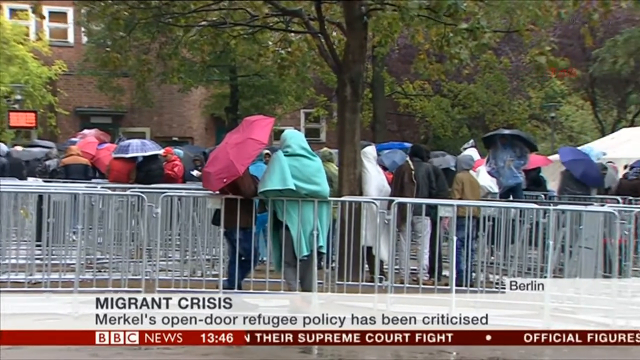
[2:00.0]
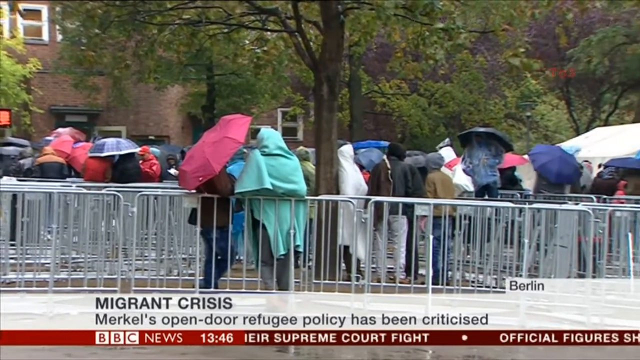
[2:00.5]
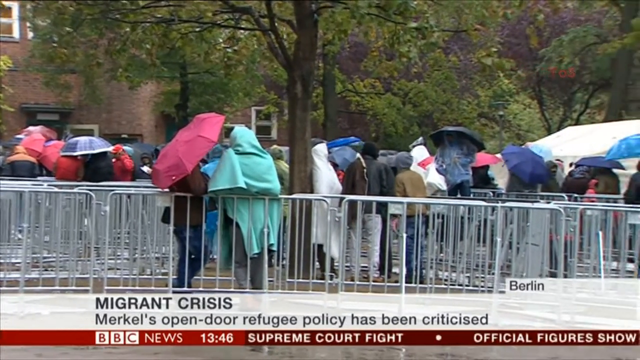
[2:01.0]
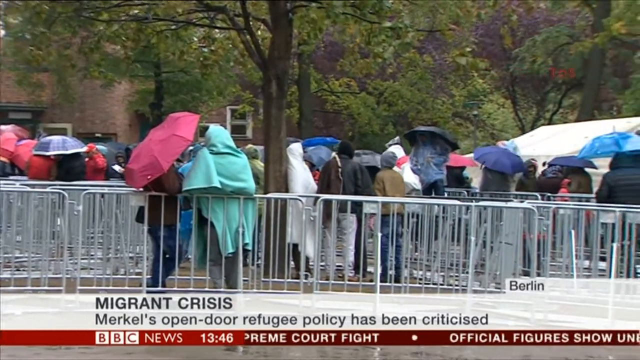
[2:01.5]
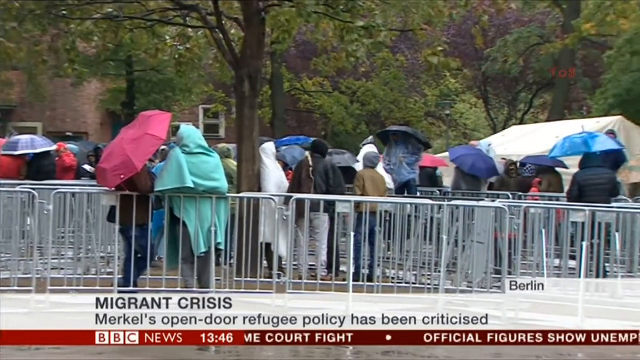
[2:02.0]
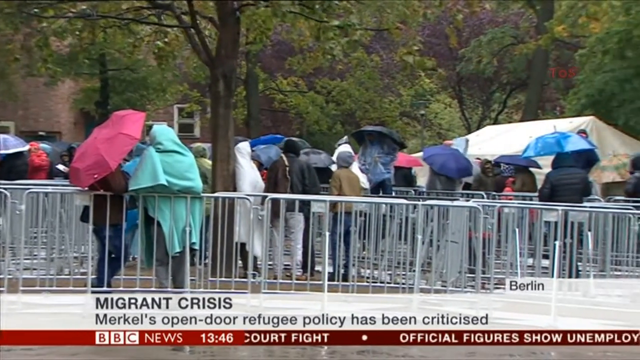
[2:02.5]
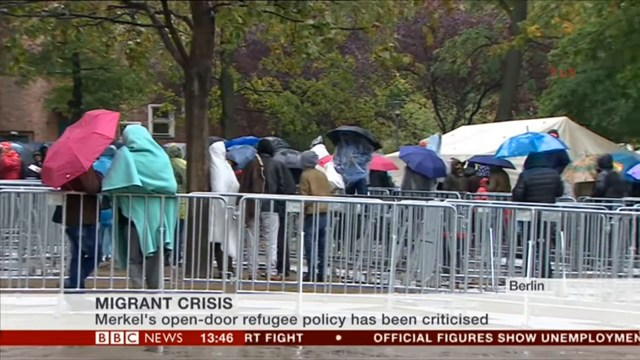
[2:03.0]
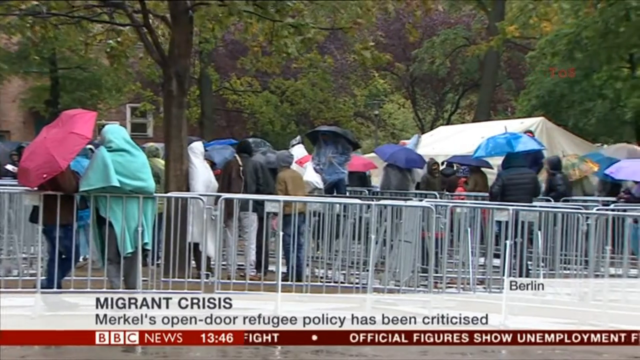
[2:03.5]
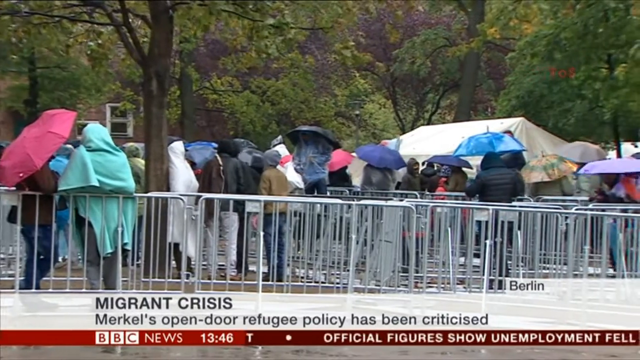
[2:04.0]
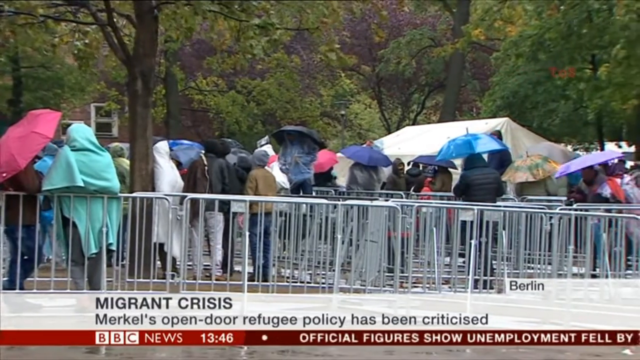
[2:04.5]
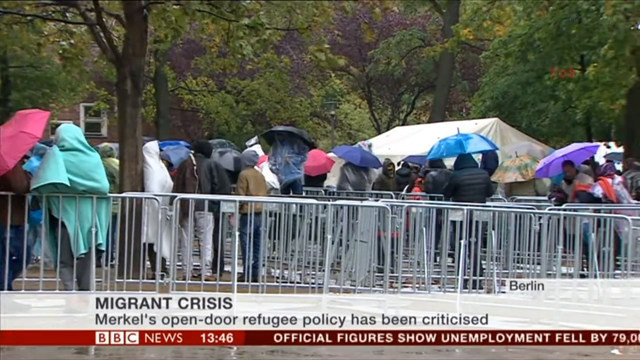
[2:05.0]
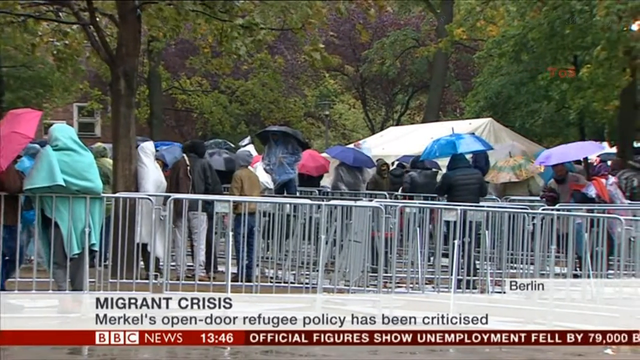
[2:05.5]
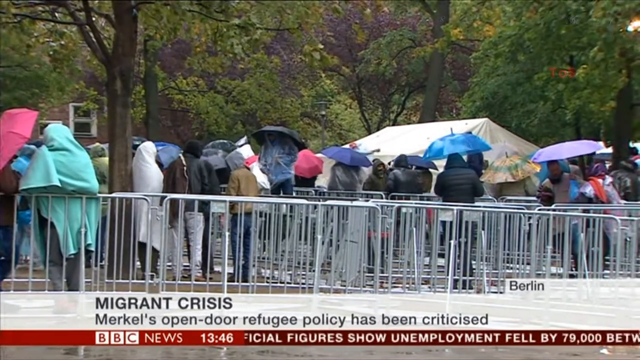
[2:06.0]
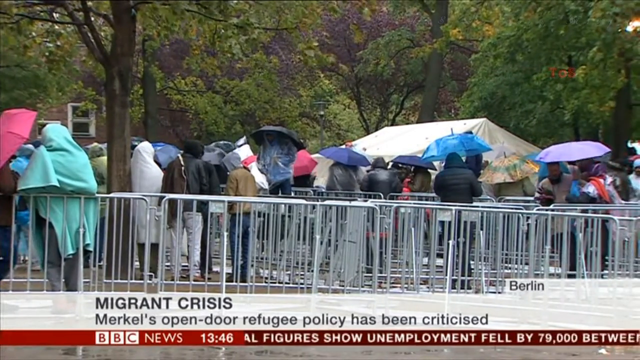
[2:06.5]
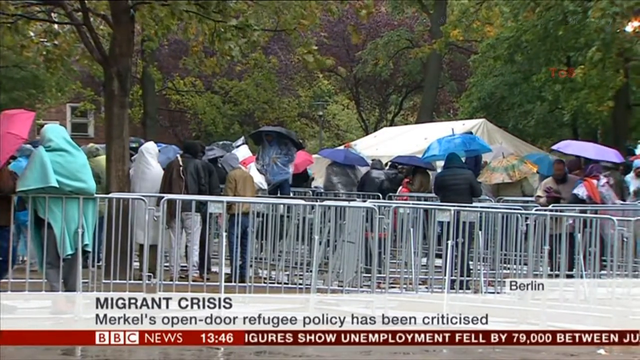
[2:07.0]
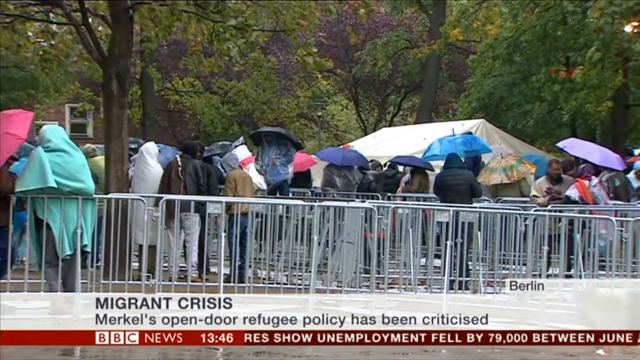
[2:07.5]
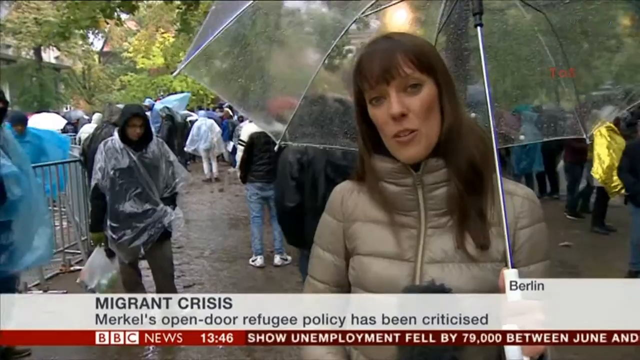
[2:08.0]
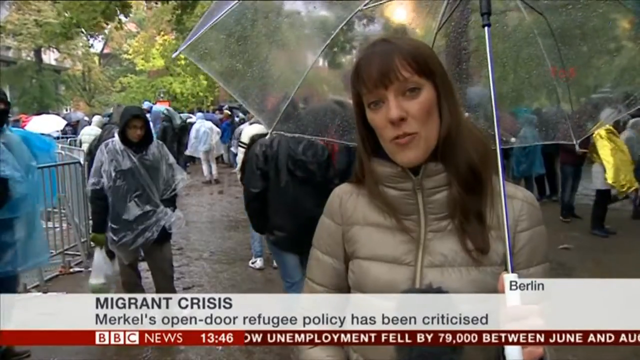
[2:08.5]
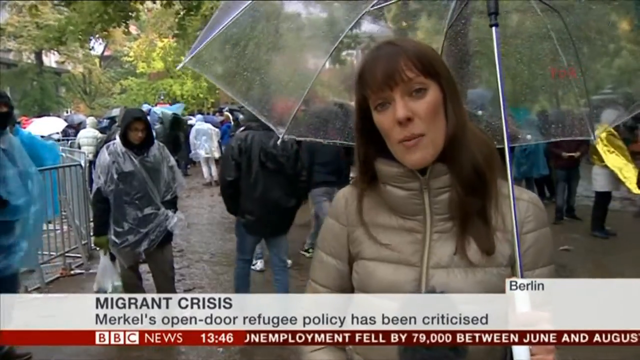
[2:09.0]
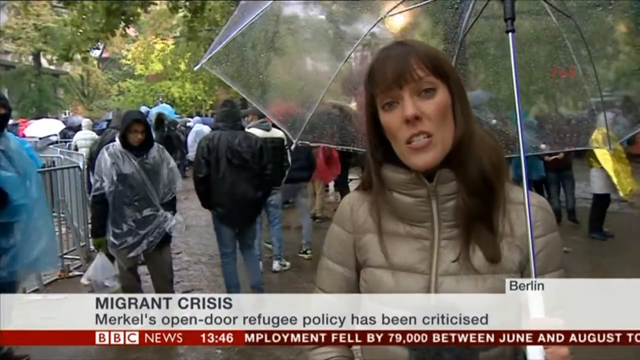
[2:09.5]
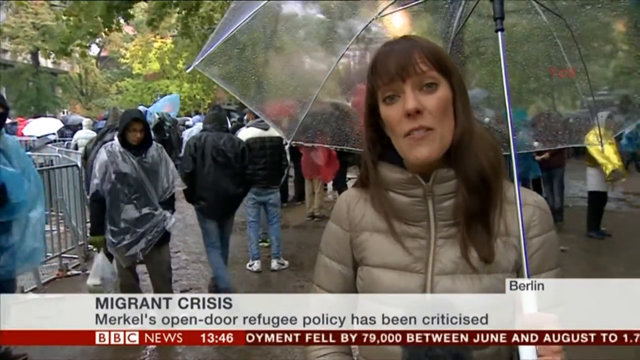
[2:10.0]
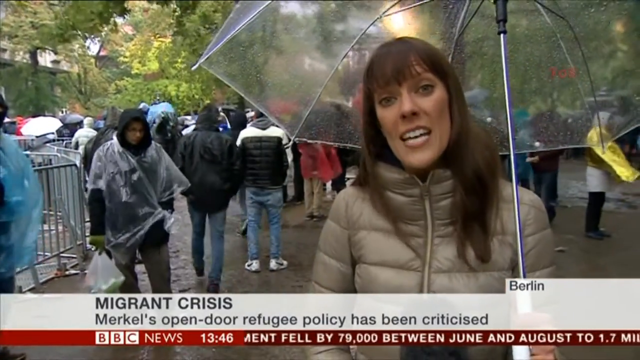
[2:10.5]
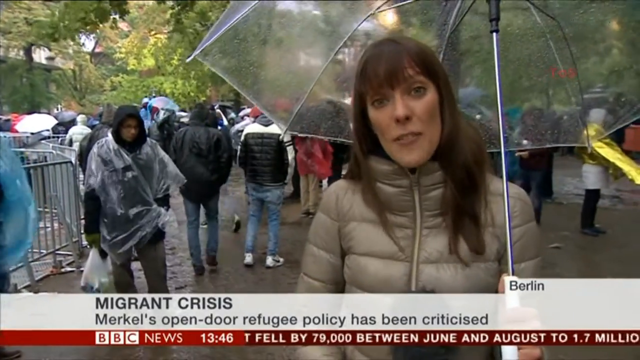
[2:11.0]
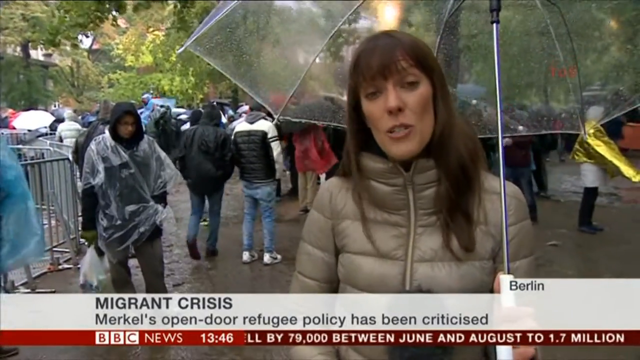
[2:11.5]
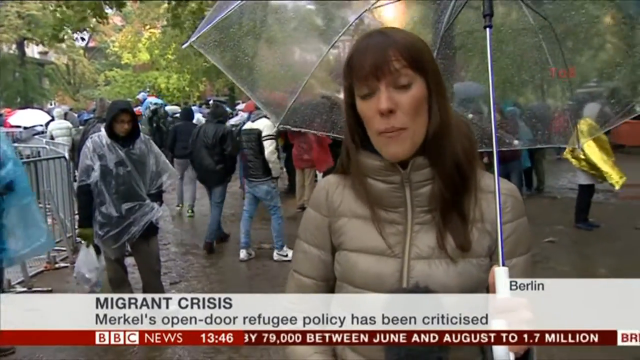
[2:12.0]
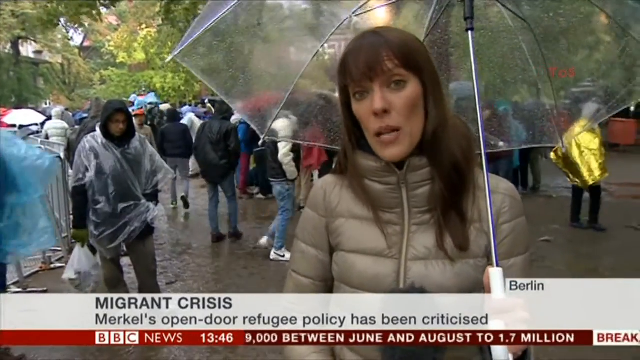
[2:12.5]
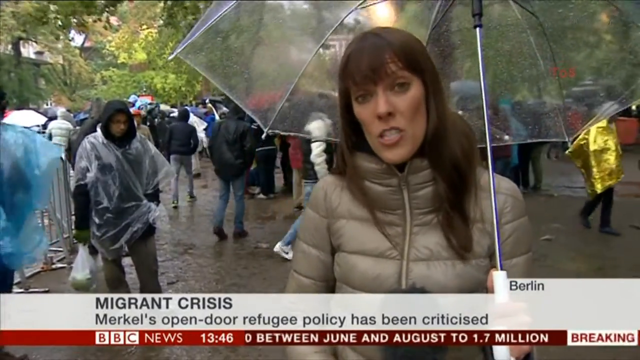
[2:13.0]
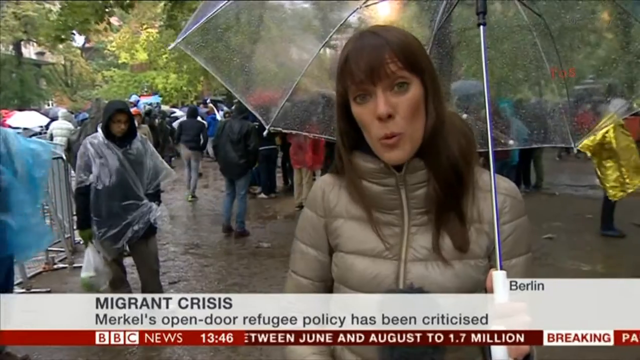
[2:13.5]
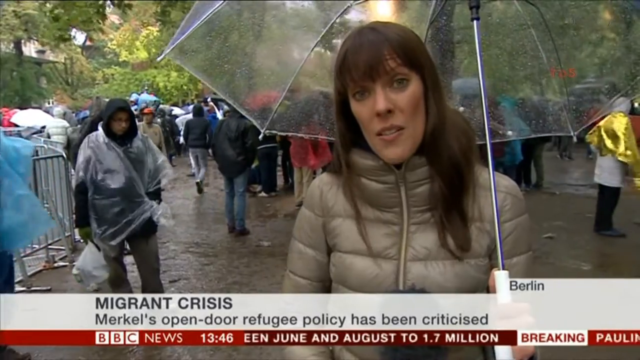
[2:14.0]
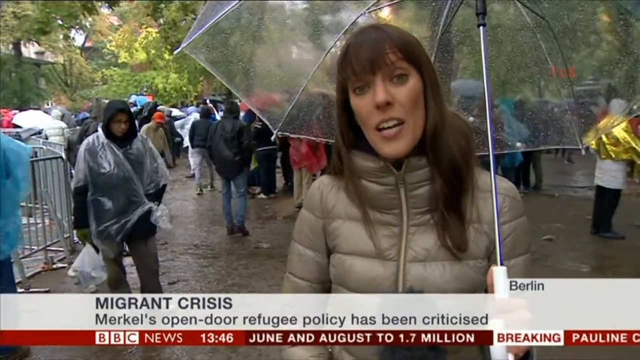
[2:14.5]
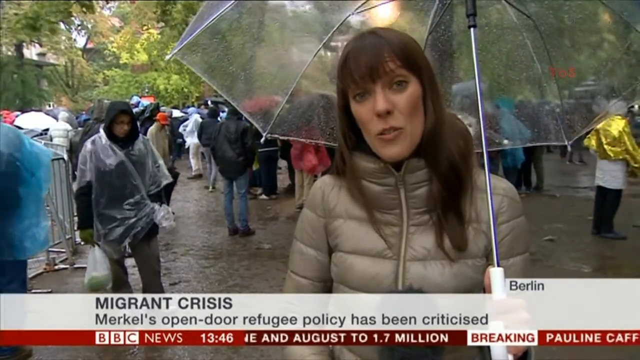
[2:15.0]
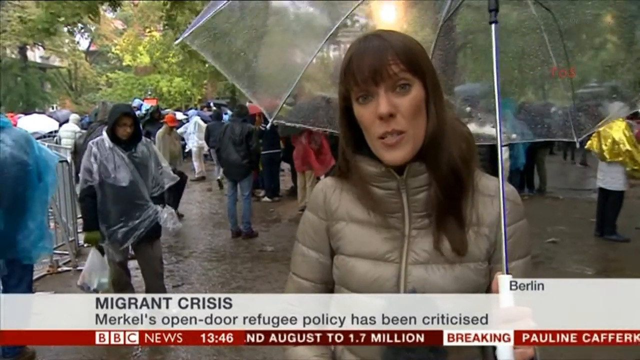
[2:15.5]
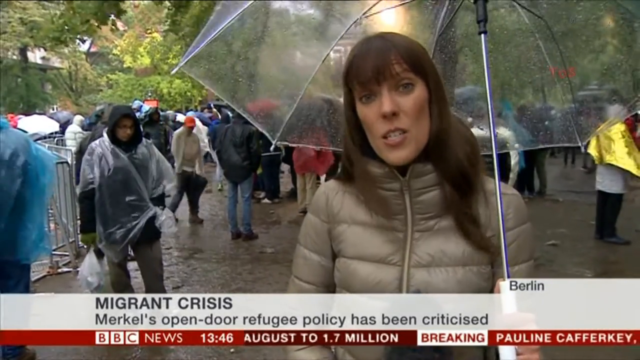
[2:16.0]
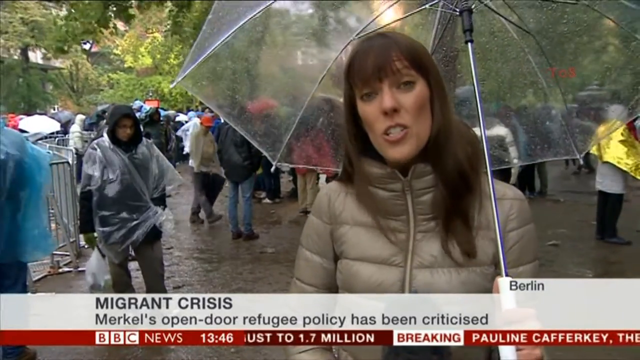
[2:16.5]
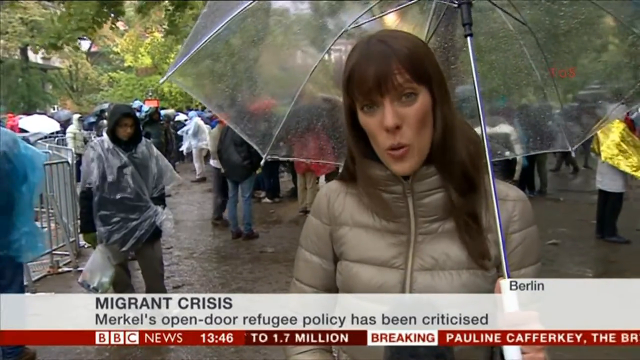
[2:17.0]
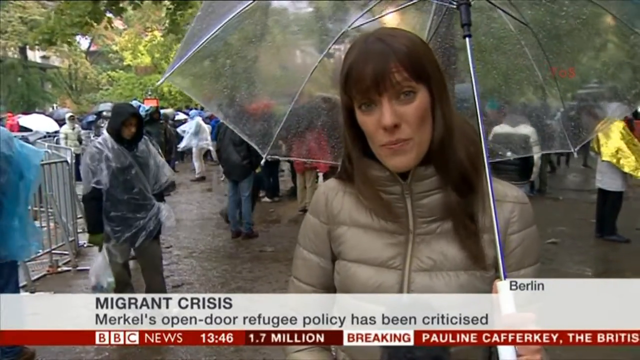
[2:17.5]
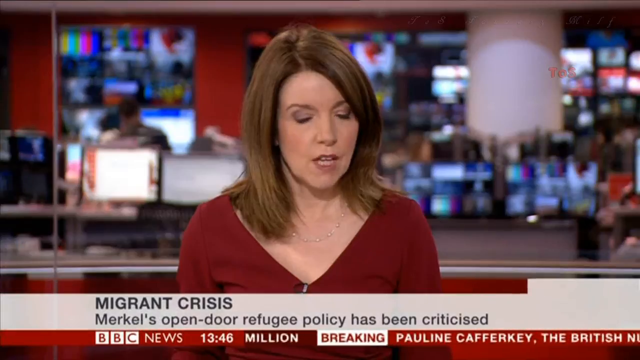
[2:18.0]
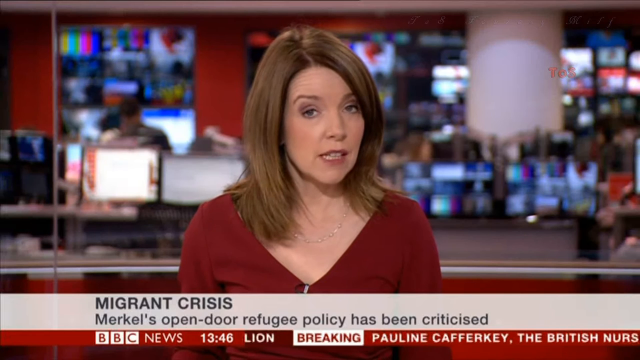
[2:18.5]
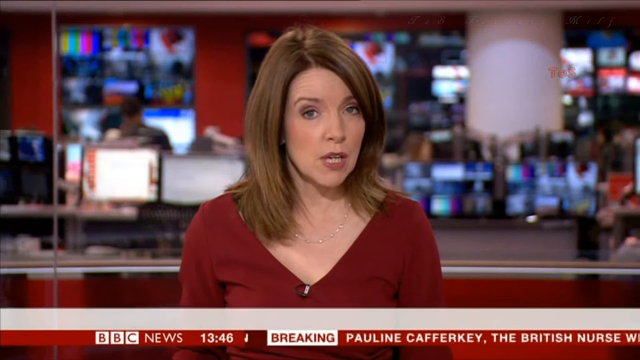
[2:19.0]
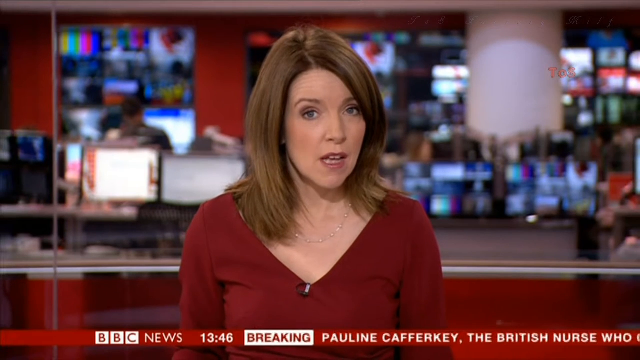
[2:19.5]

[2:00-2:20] The camera pans to the side, showing the migrants seemingly in a line behind metal-like barricades. Most of them are standing, with no one visibly sitting, and they face a tent-like structure and the sign with the digital information. They are not moving and seem to be waiting. The camera pans back to the reporter, standing outside in the rain and talking, now in a closer shot than before; she seems calm but serious. The video then returns to what seems to be the newsroom, where another anchorwoman sits behind a desk.